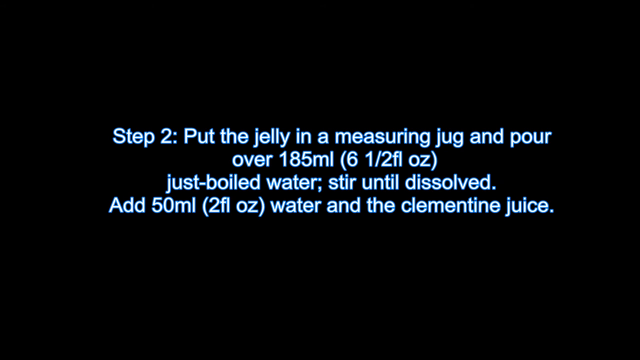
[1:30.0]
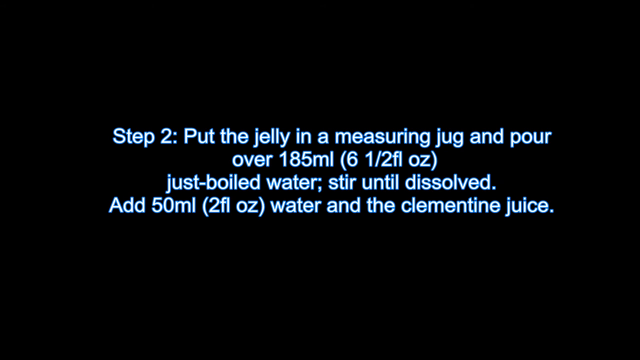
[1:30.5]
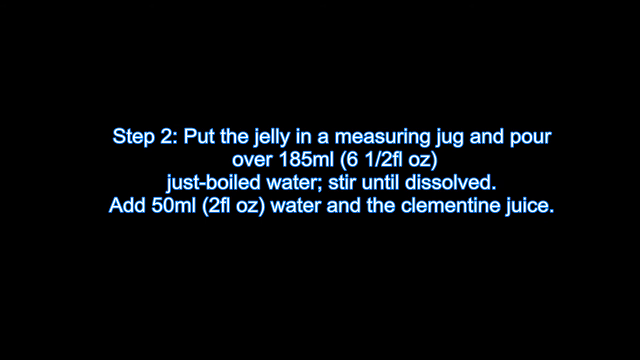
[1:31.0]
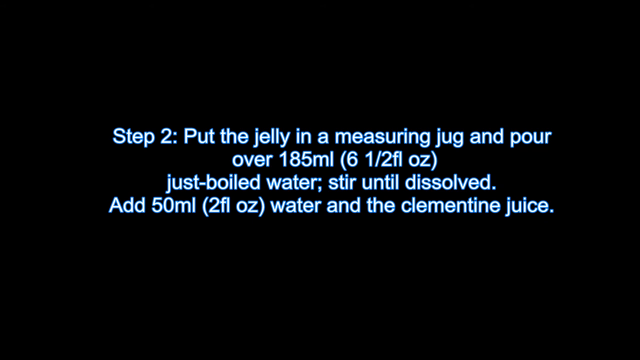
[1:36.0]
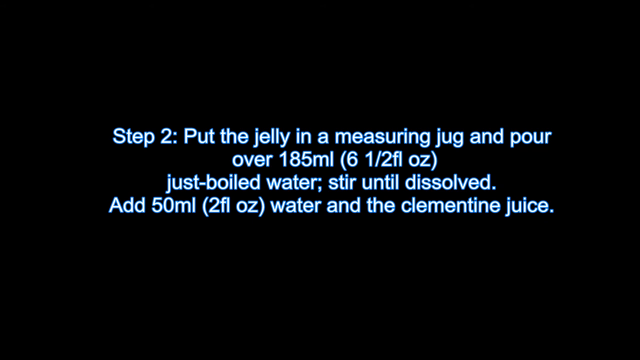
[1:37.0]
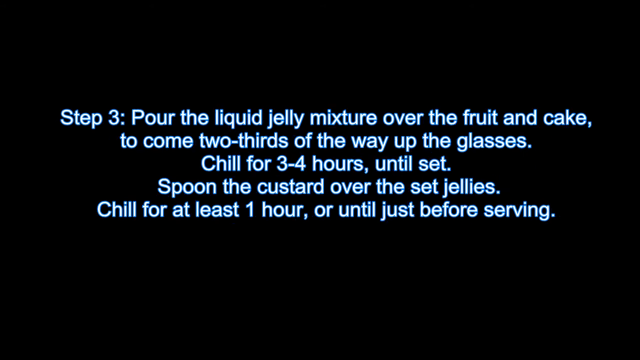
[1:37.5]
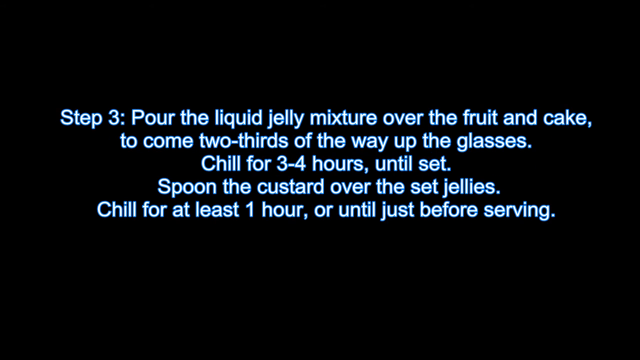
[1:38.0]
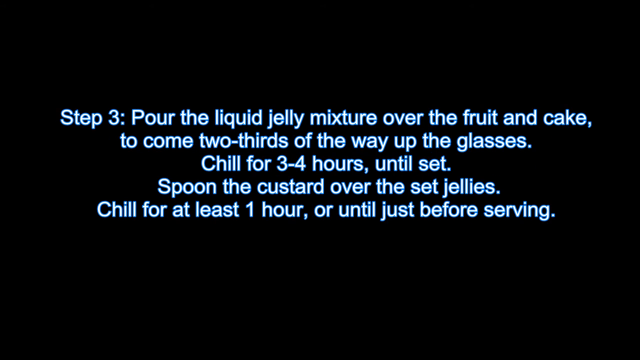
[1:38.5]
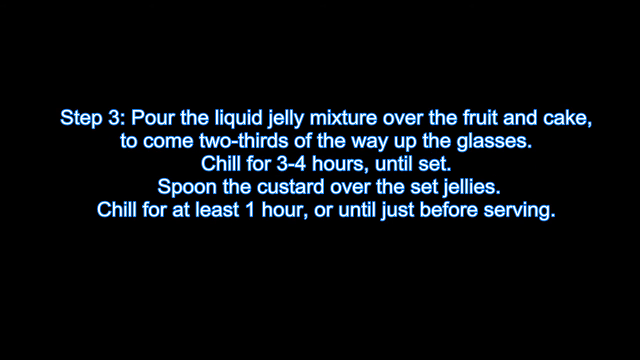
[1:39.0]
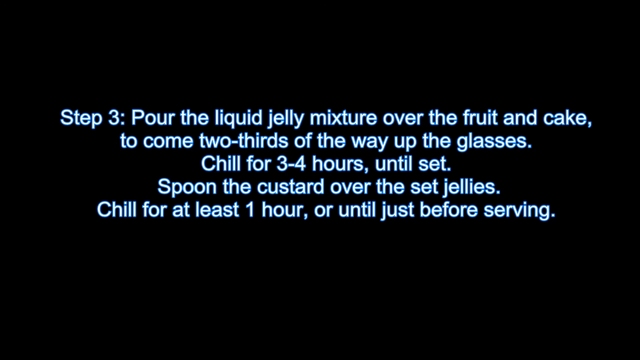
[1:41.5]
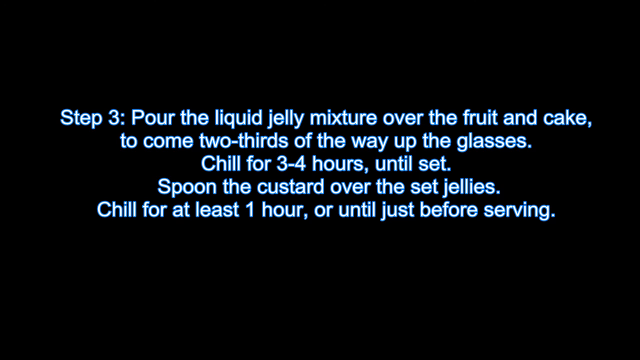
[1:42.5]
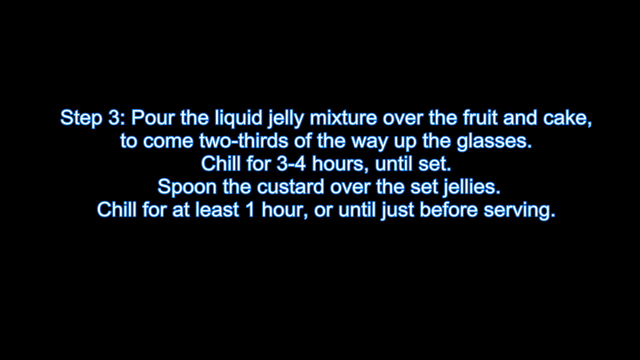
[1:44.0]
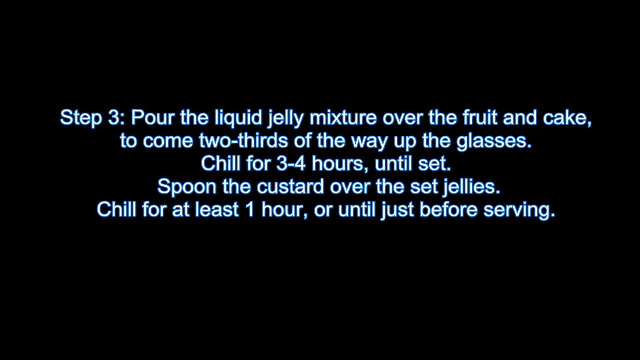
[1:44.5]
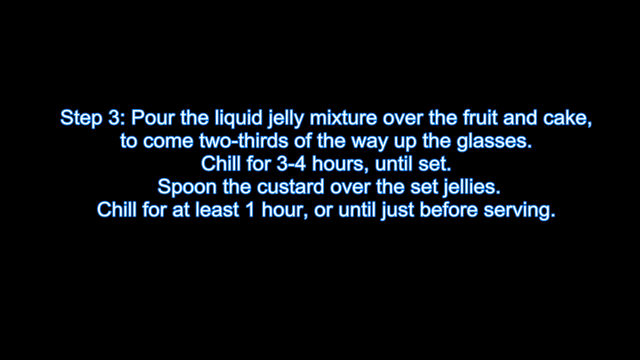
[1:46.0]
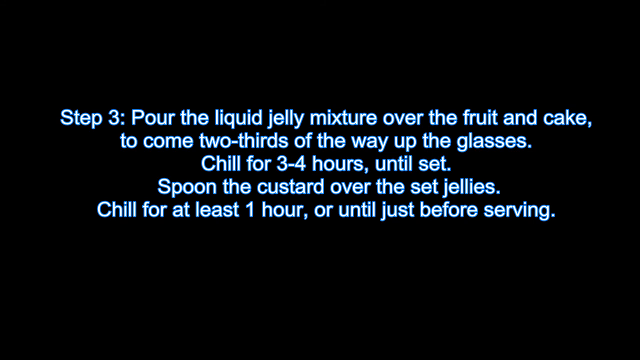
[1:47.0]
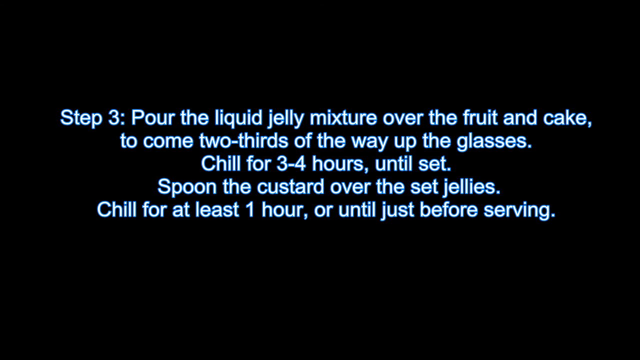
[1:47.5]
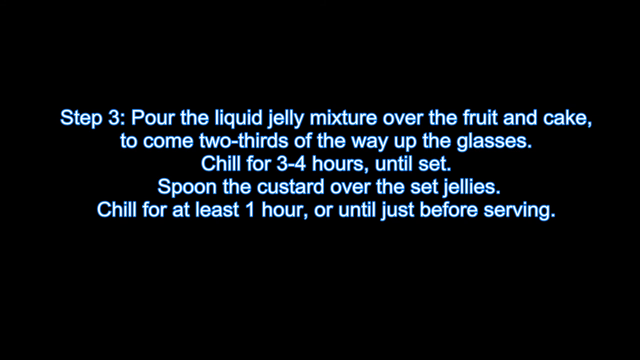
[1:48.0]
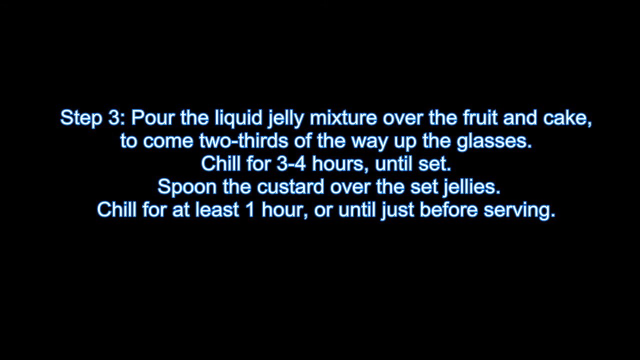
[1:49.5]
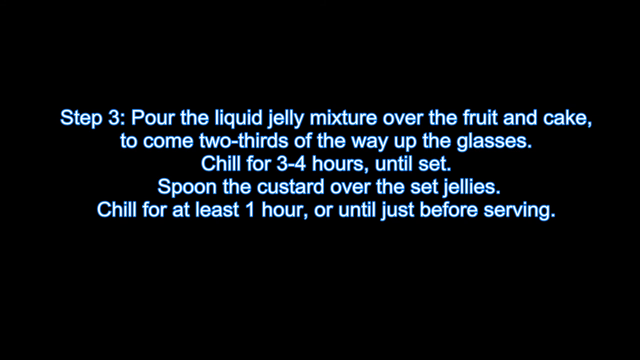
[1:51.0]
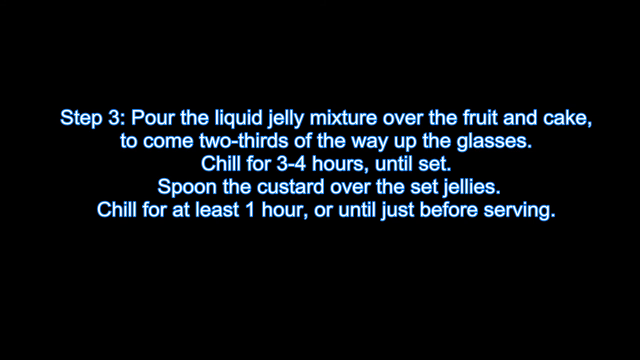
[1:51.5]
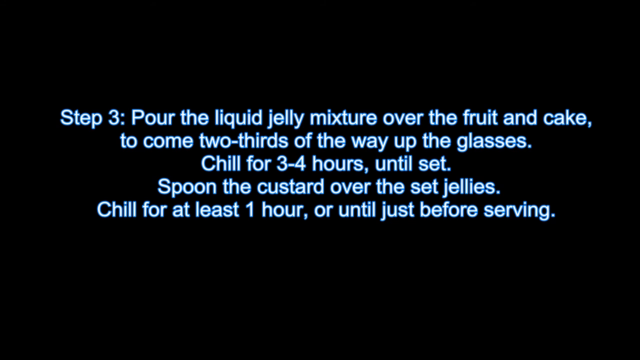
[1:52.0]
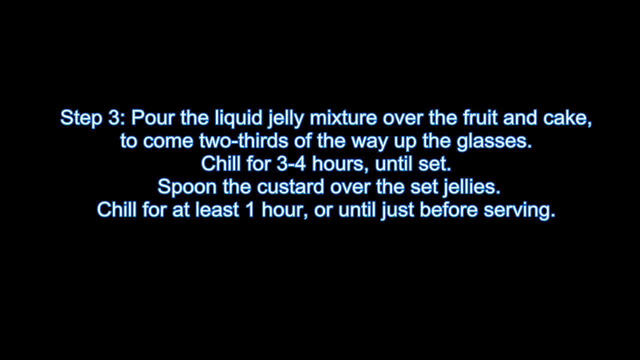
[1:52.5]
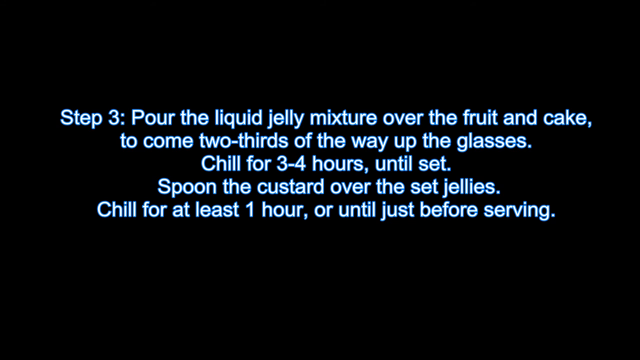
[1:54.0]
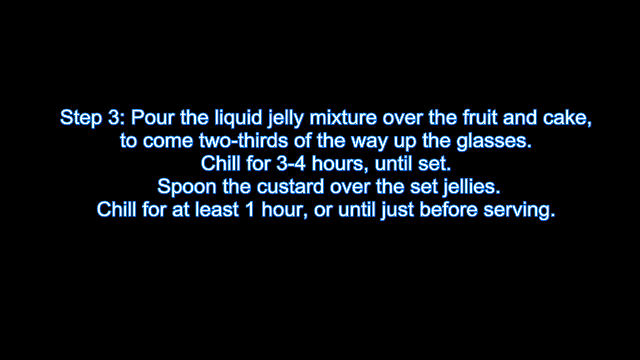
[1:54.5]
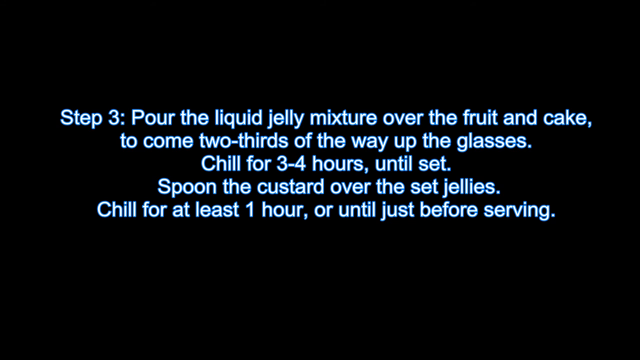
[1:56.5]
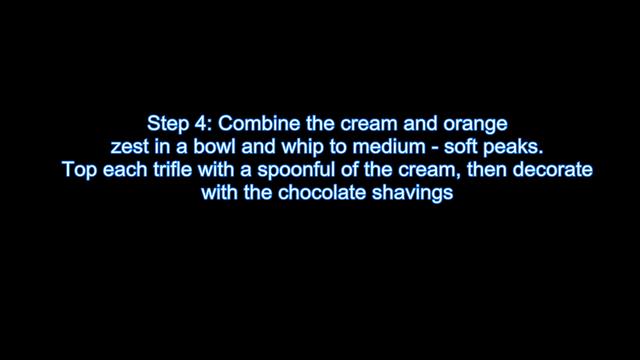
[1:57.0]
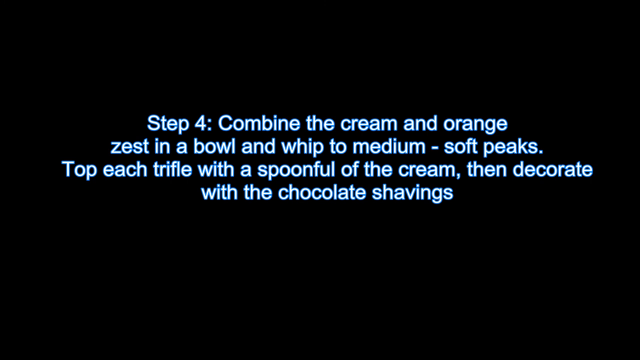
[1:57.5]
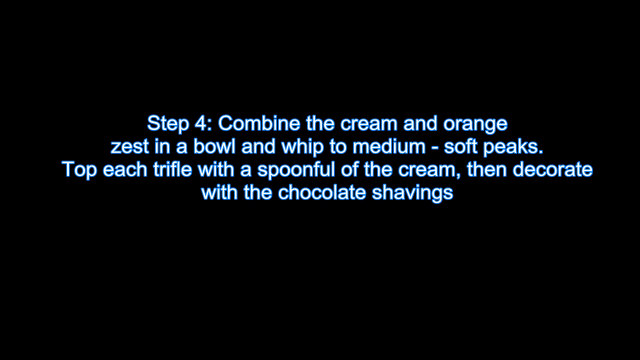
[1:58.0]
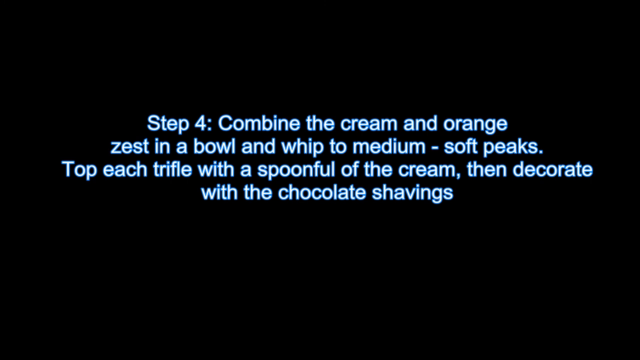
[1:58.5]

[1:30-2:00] The instructions move from step two to step three, which reads "pour the liquid jelly mixture over the fruit and cake to come two thirds of the way up to the glasses. Chill for three to four hours until set." It also reads "Chill for at least one hour or until just before serving."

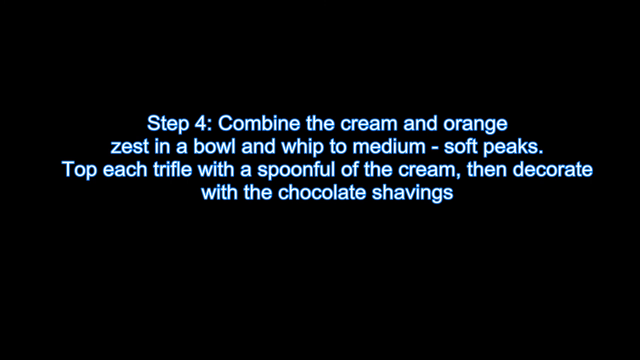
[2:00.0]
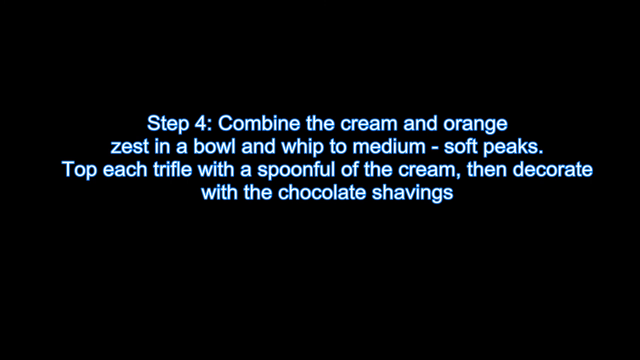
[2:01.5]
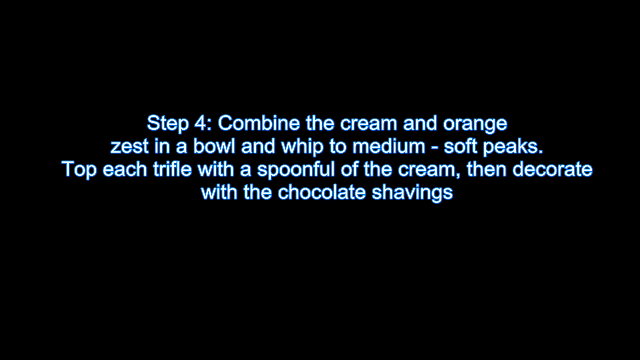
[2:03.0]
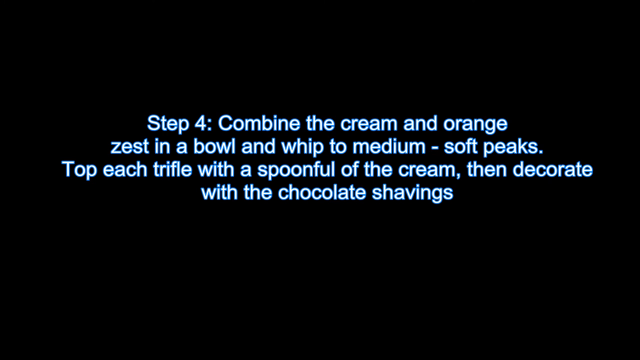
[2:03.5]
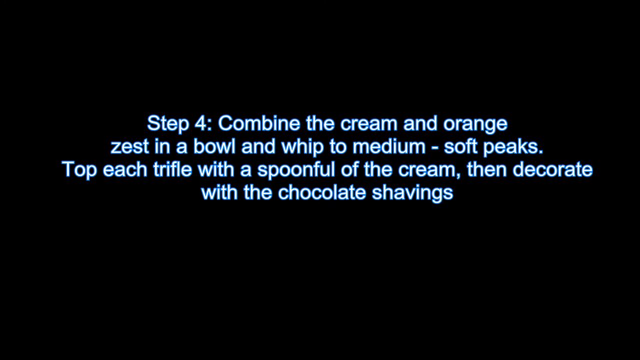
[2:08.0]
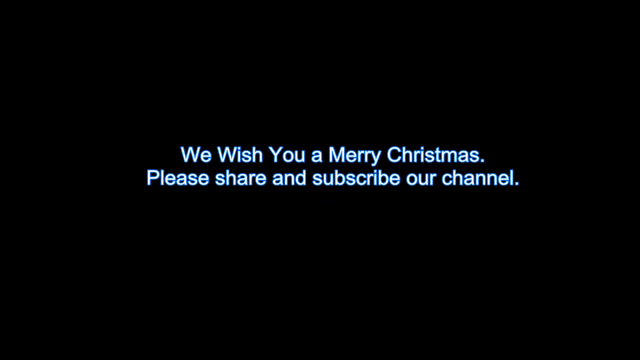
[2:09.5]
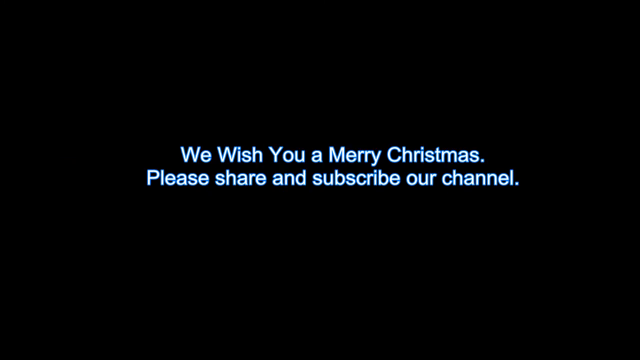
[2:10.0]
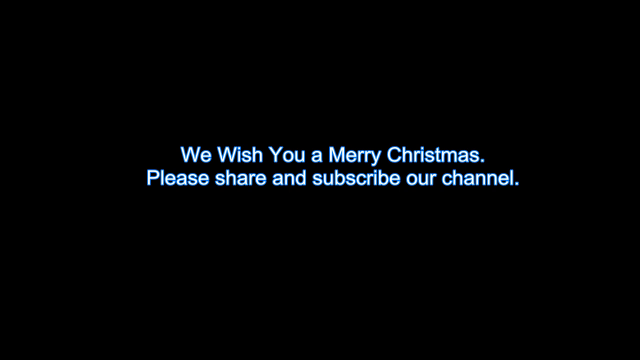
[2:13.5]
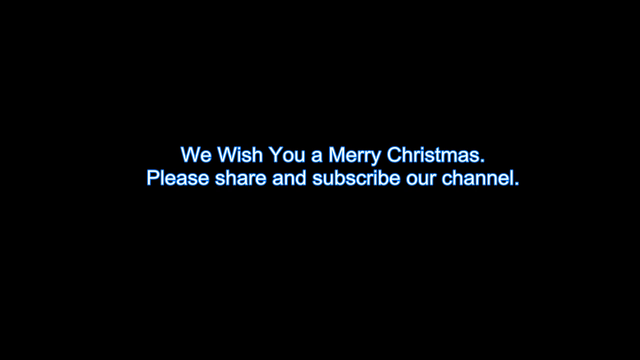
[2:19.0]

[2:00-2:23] The next instruction says to "combine the cream and orange zest in a bowl and whip to medium".